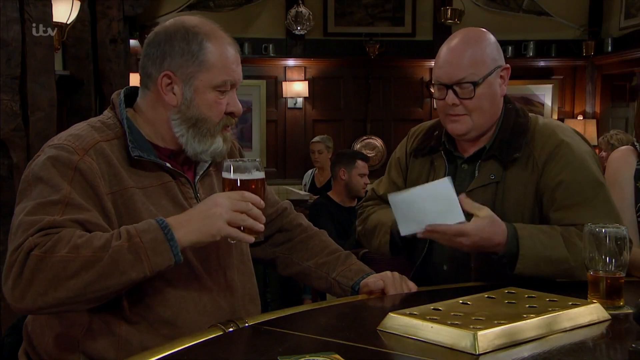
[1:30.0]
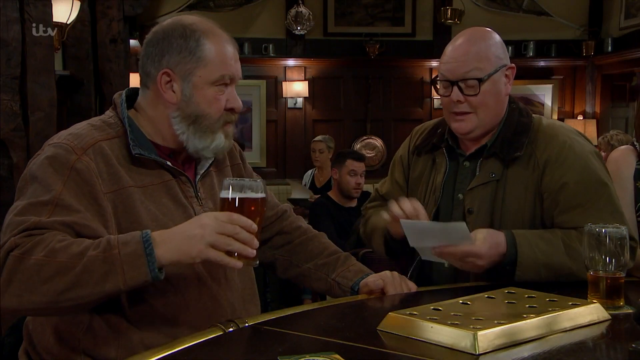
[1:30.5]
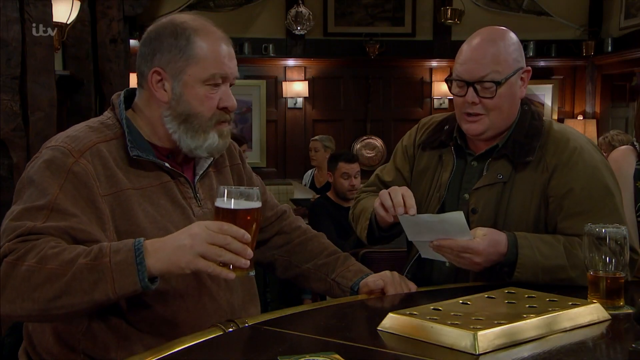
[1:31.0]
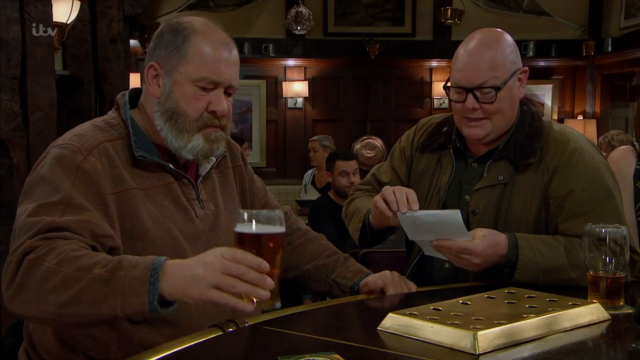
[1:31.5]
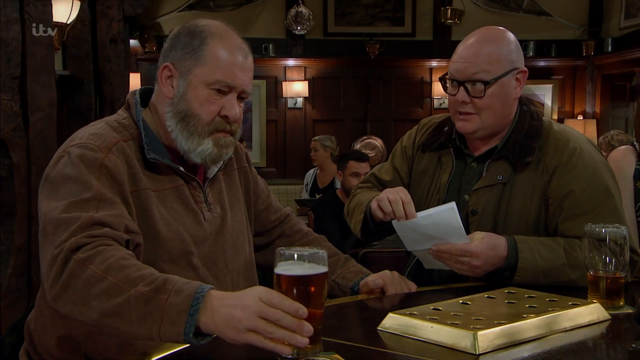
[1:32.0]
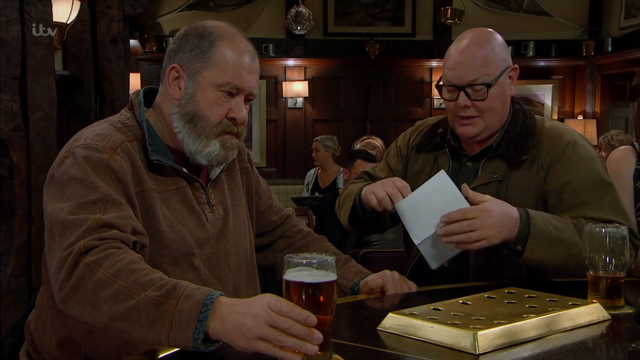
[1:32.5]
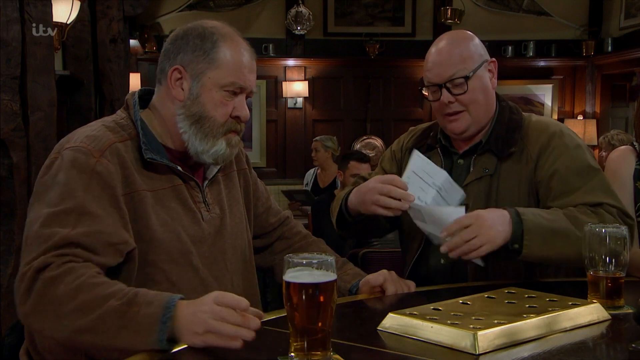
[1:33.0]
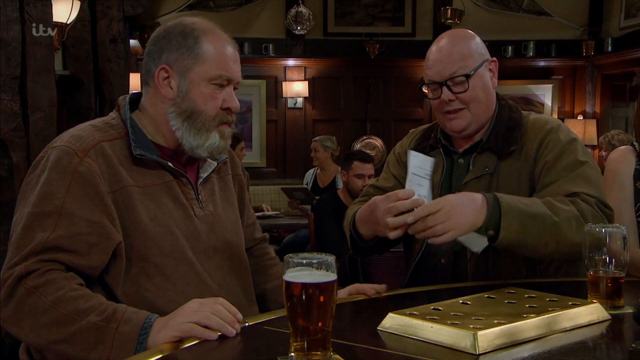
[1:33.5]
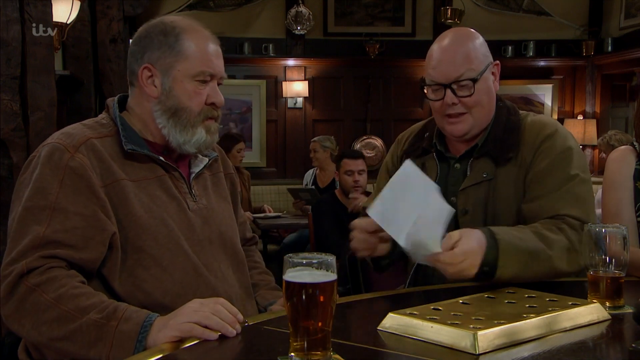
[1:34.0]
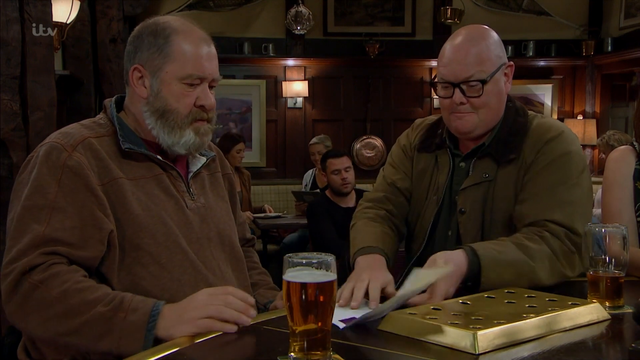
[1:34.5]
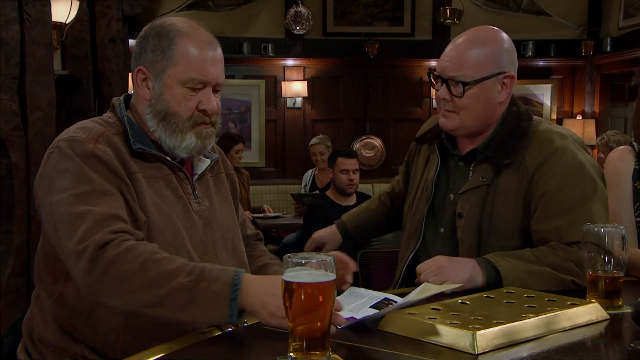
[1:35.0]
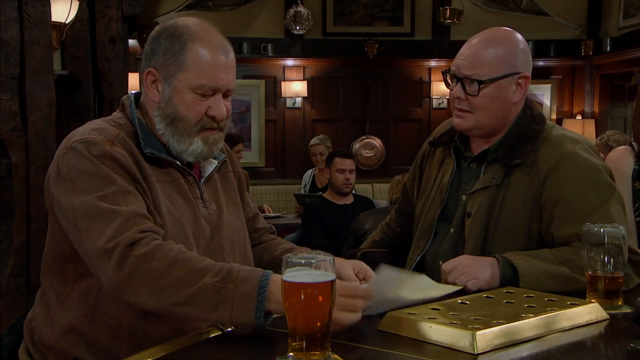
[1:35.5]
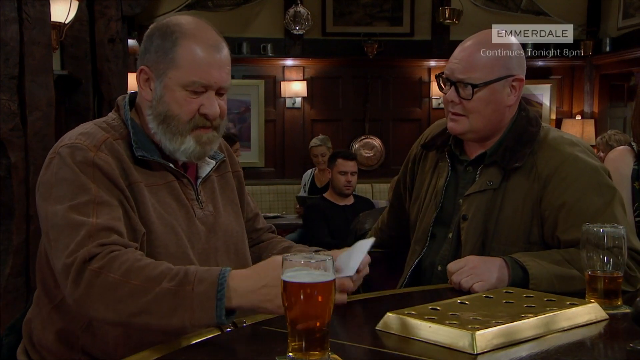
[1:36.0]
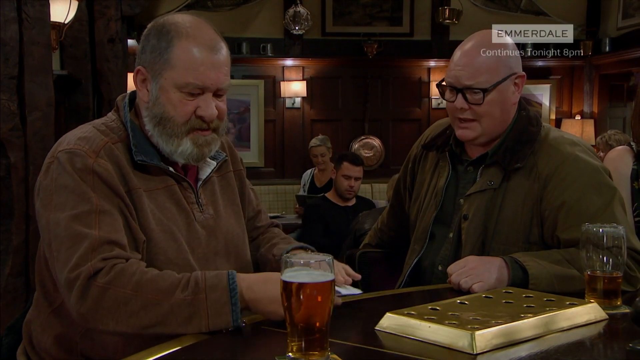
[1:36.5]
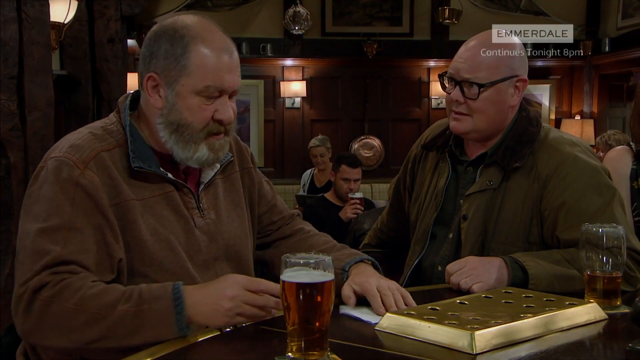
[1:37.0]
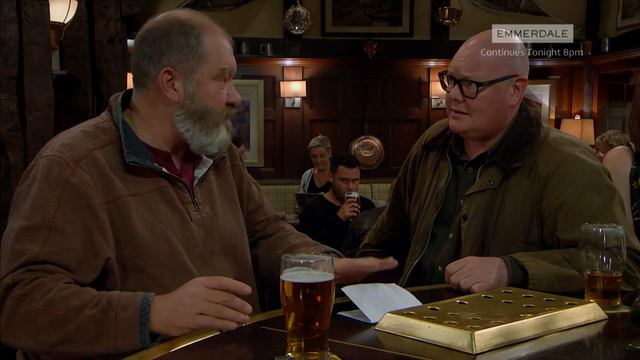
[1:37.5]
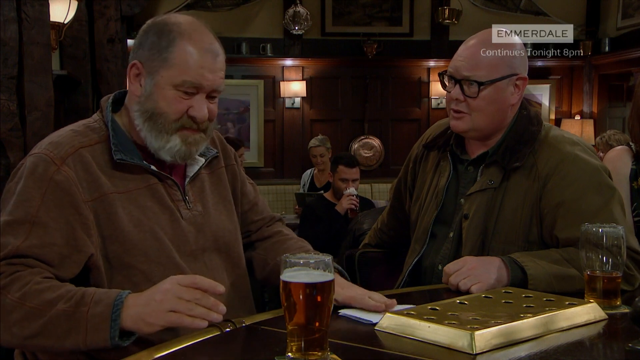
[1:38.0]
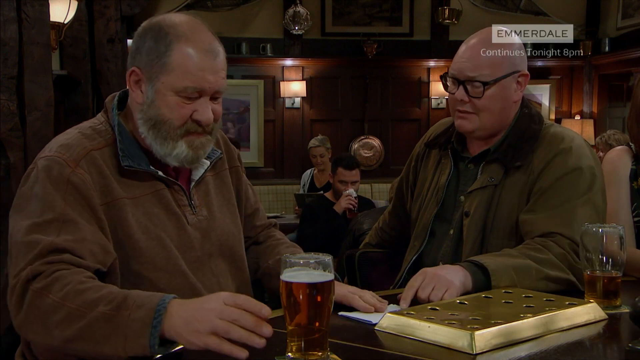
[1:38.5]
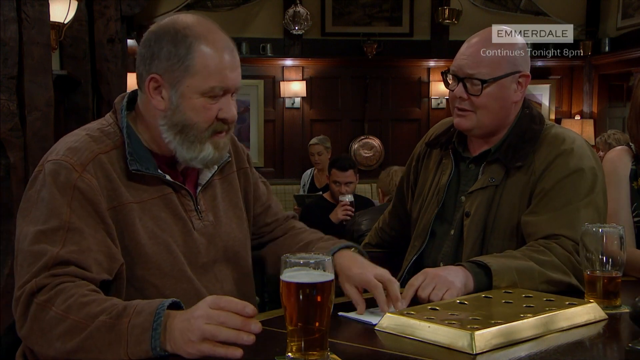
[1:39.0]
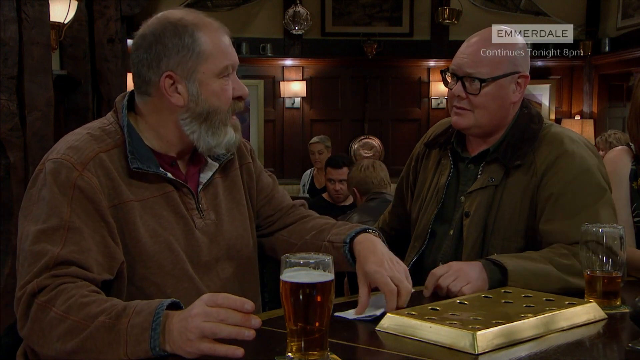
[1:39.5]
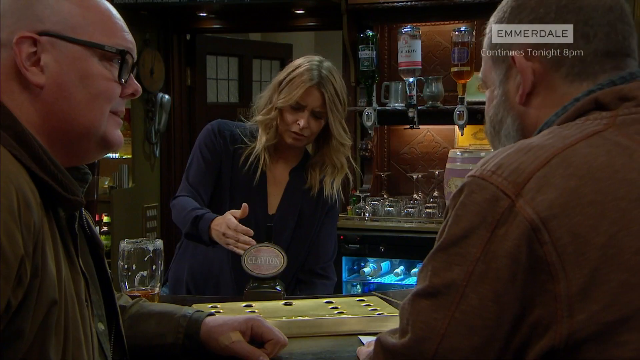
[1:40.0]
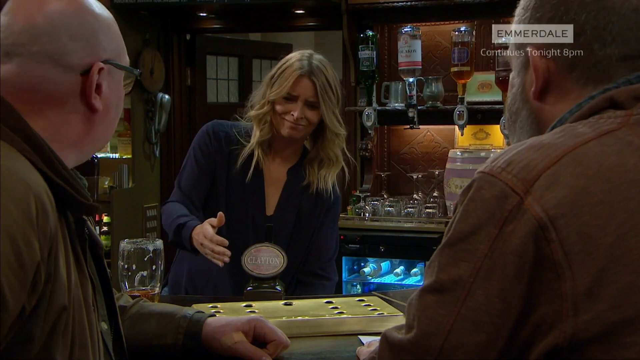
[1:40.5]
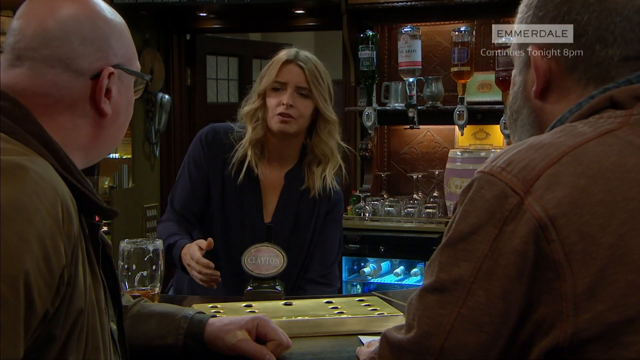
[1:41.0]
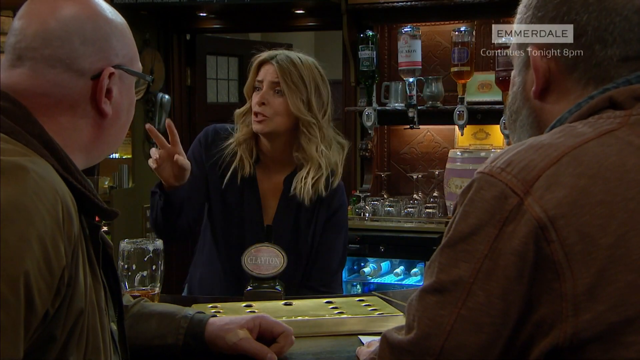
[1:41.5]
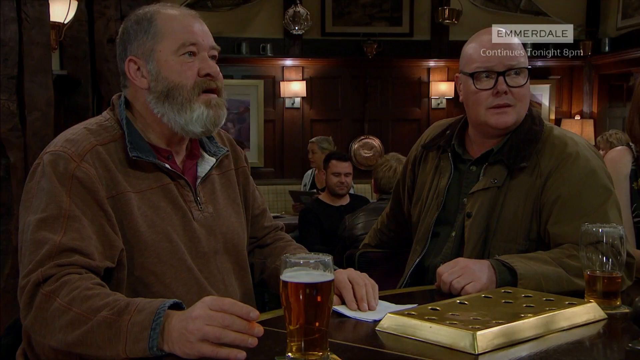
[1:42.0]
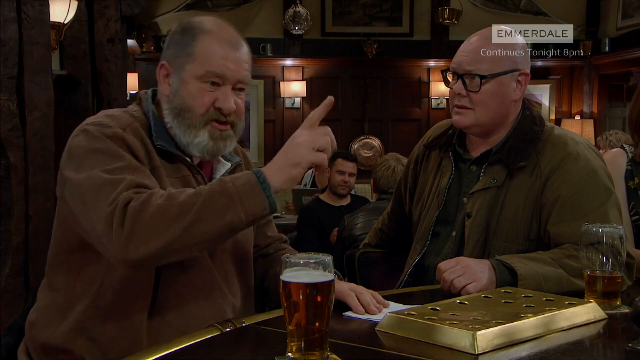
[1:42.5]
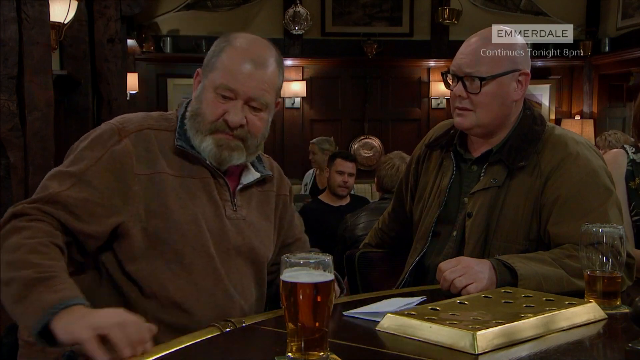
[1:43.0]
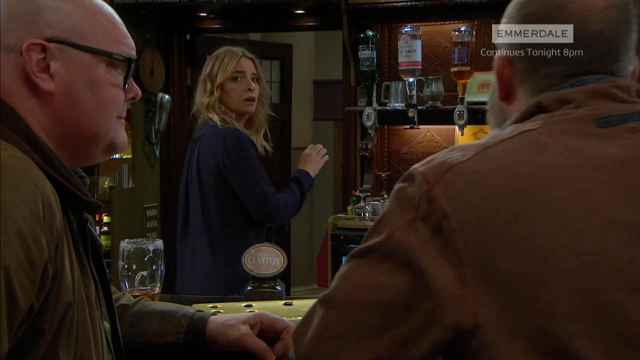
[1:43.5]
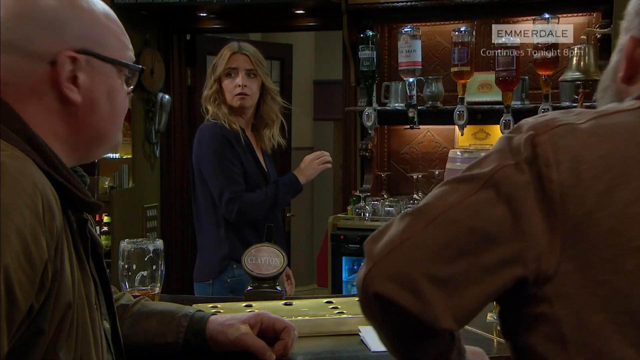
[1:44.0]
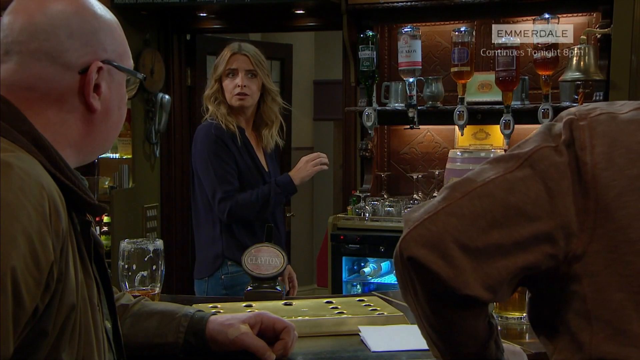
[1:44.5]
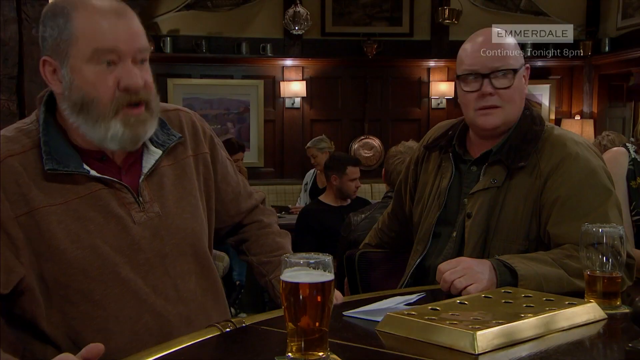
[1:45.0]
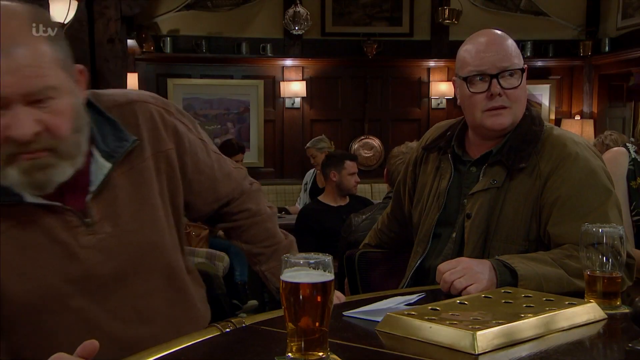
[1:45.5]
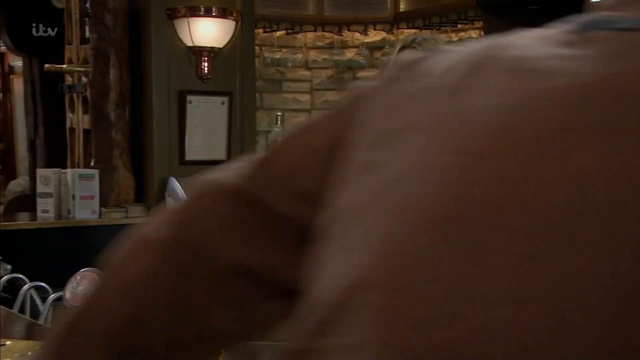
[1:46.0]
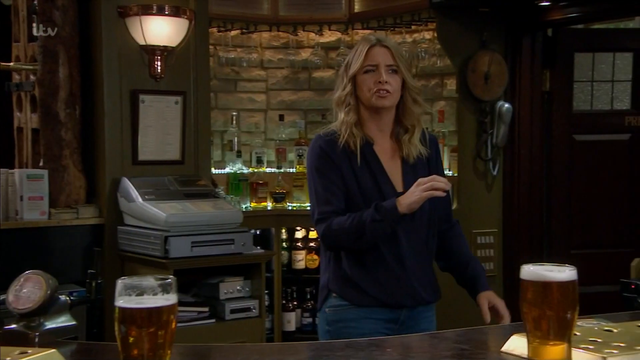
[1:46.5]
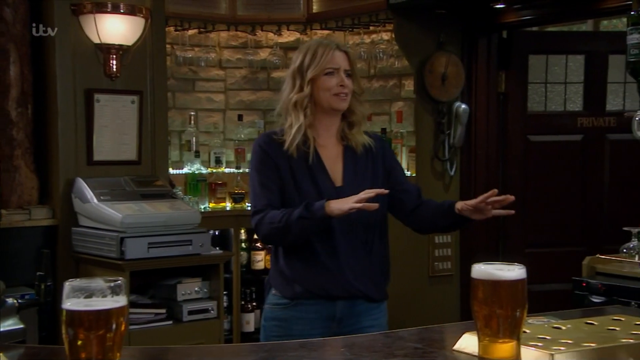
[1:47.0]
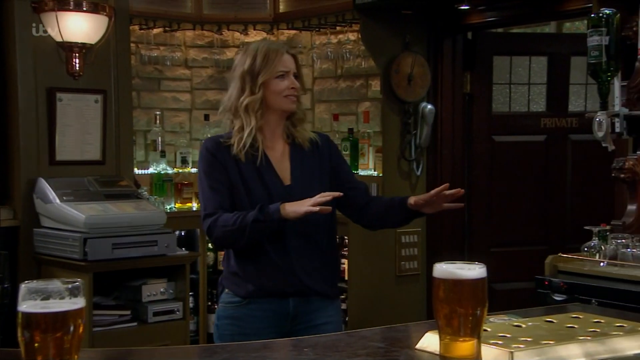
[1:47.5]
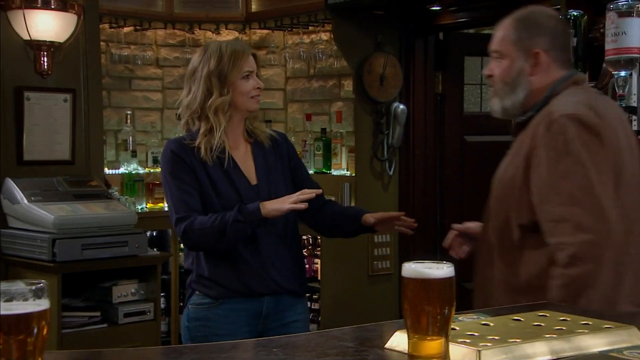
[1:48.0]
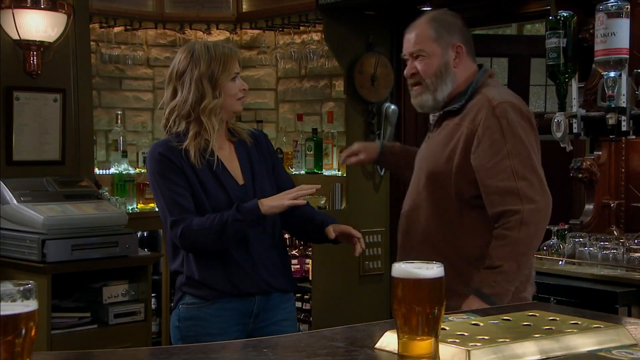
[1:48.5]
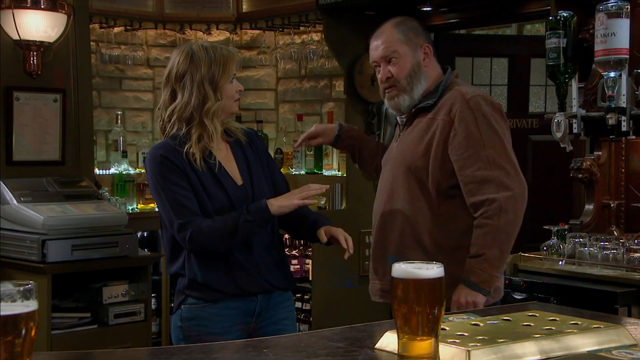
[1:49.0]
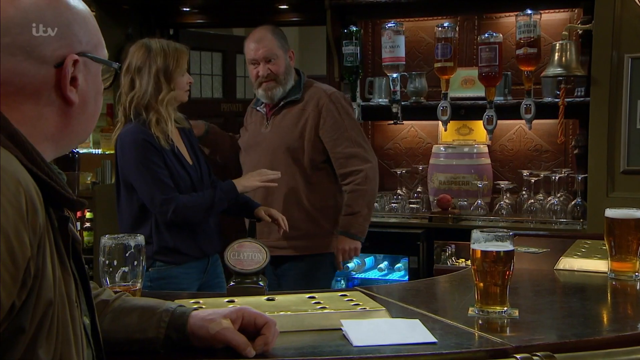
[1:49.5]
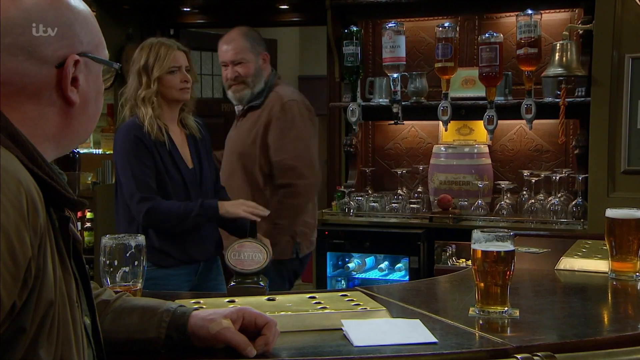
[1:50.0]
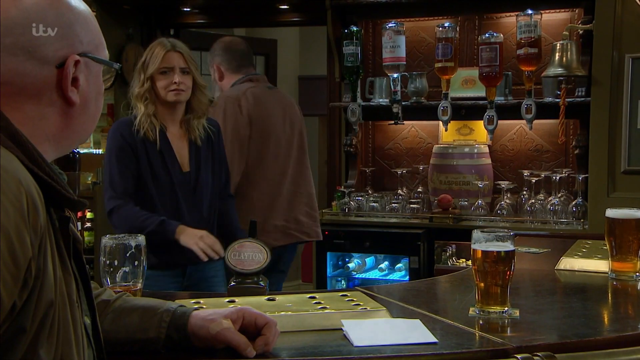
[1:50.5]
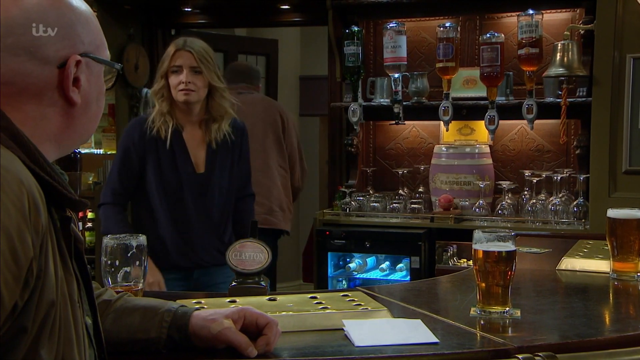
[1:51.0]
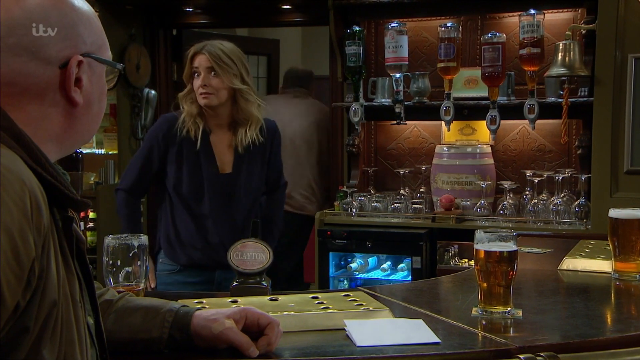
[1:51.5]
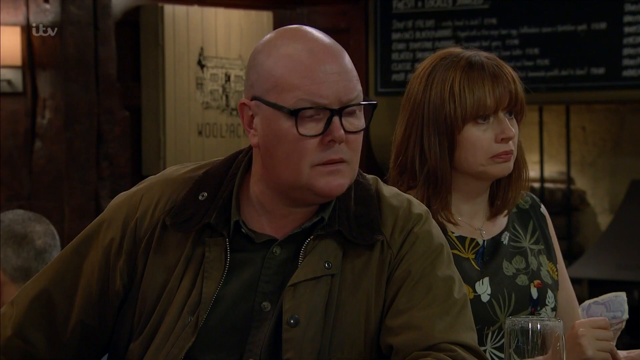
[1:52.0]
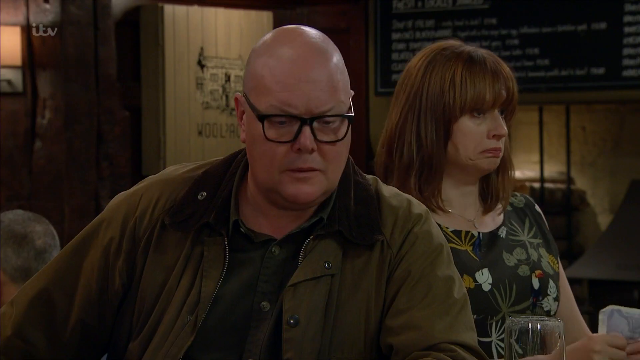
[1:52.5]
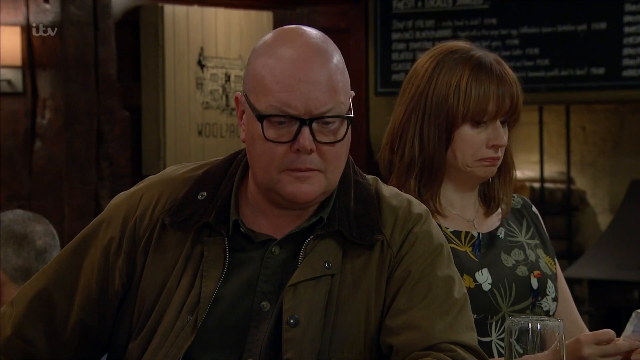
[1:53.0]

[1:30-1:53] The man in the brown leather jacket holds his full glass of beer in his right hand just below his mouth. The bald man in glasses and a green jacket sitting beside him holds a piece of paper in his right hand just above the bar, with a half-empty glass of beer on the bar in front of him. He talks to the man in the brown leather jacket, then places both hands on the piece of paper and unfolds it. He places the paper in front of the man in the brown leather jacket, who picks it up with both hands, folds it back and taps it on the table, refusing to look at it. The view changes to behind the scene, showing the female bartender in the blue shirt reaching underneath the bar. She raises her right hand in the air and motions her index and middle fingers out toward the two men. The man in the brown leather jacket points his right index finger up as he begins standing from the bar, then stands up and walks away. He reappears on camera, going behind the bar to where the cashier is standing. She begins raising both hands in the air, surprised as he approaches. He raises his right hand and walks away through the doorway behind the bar.